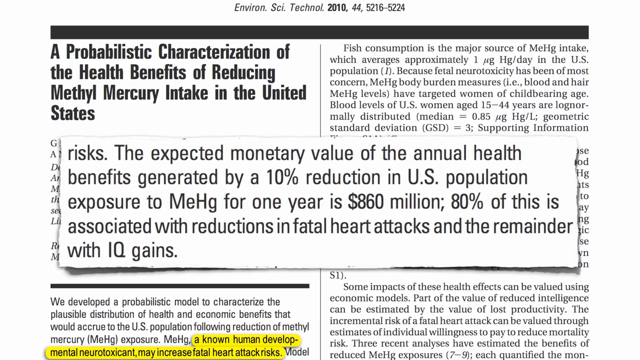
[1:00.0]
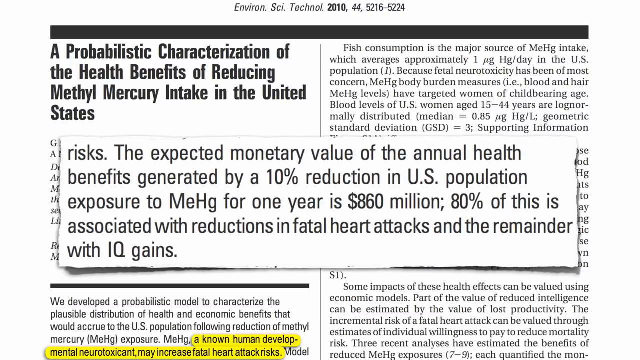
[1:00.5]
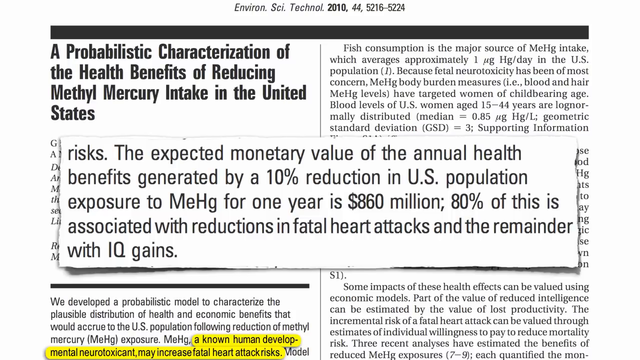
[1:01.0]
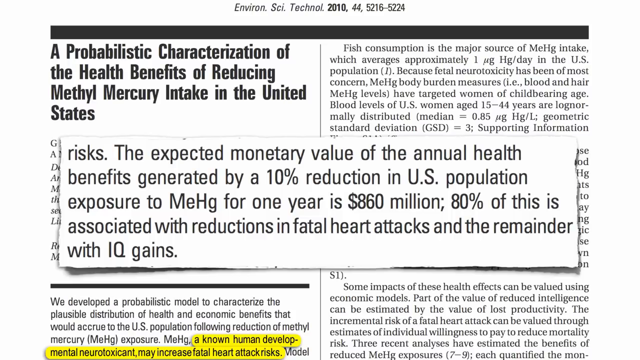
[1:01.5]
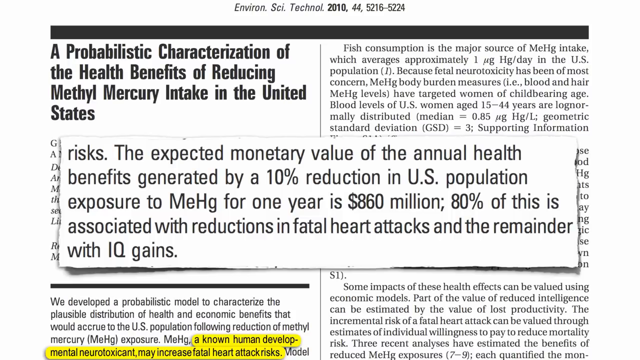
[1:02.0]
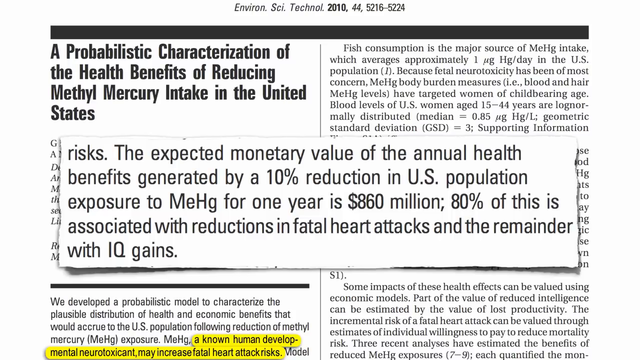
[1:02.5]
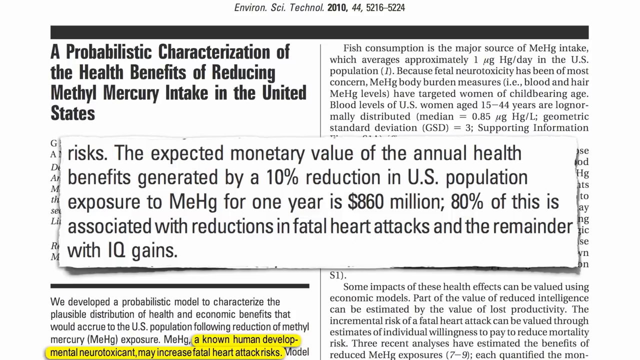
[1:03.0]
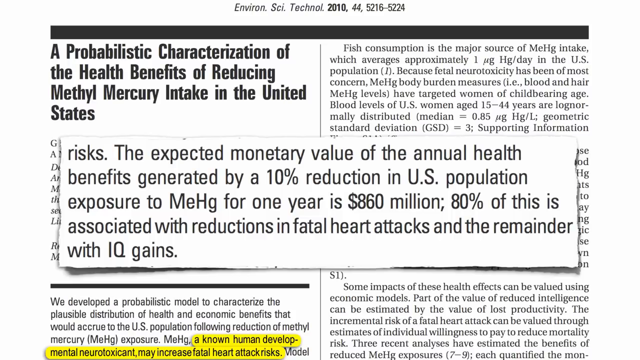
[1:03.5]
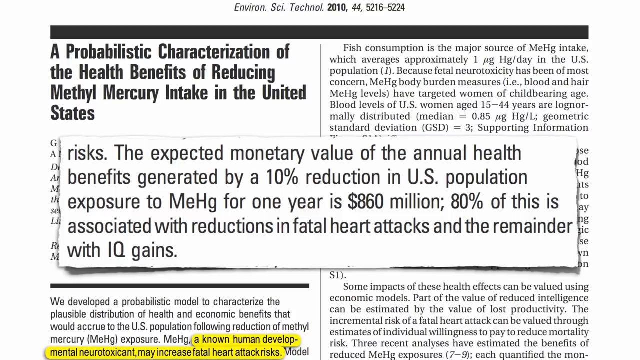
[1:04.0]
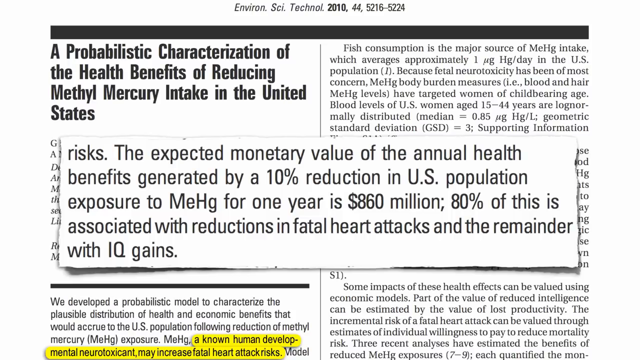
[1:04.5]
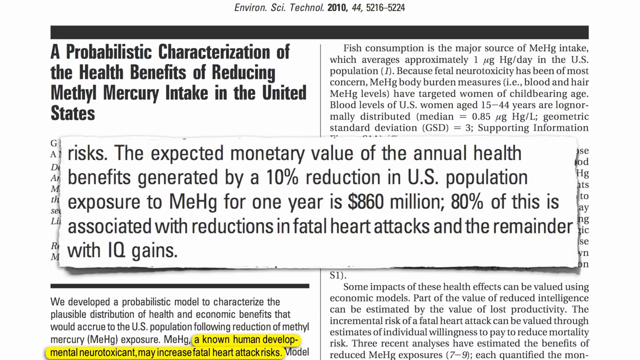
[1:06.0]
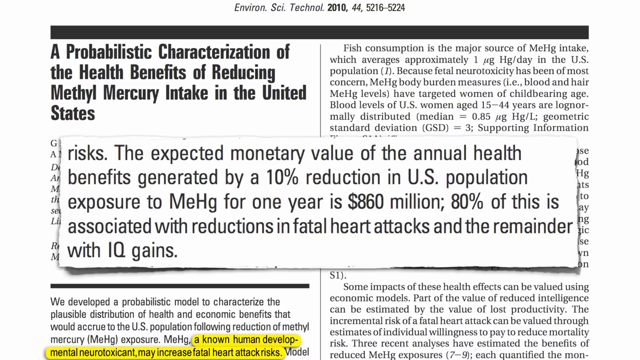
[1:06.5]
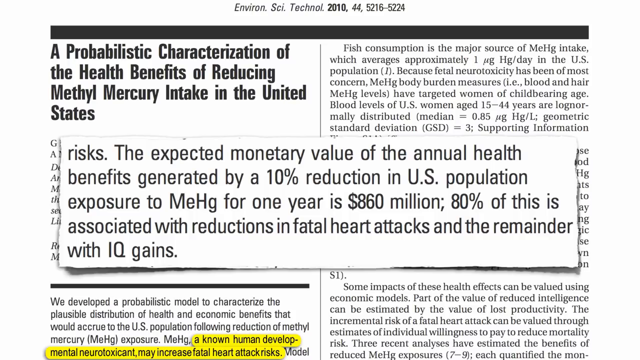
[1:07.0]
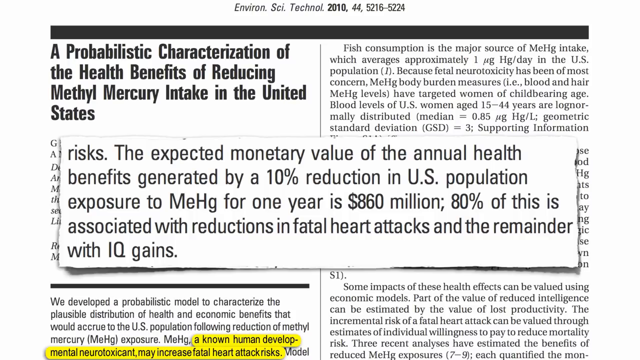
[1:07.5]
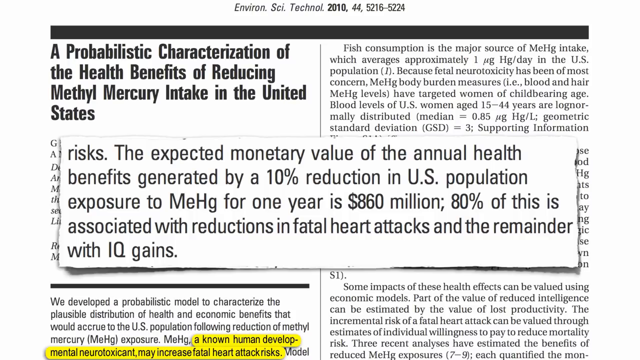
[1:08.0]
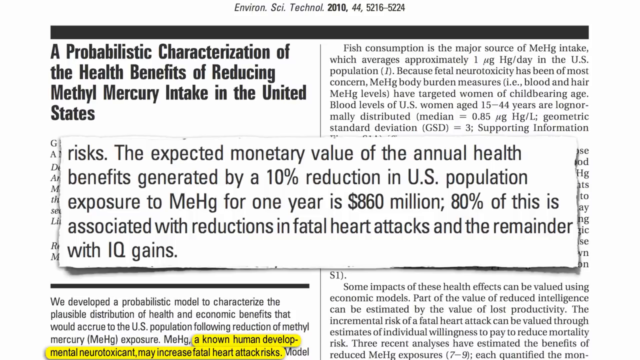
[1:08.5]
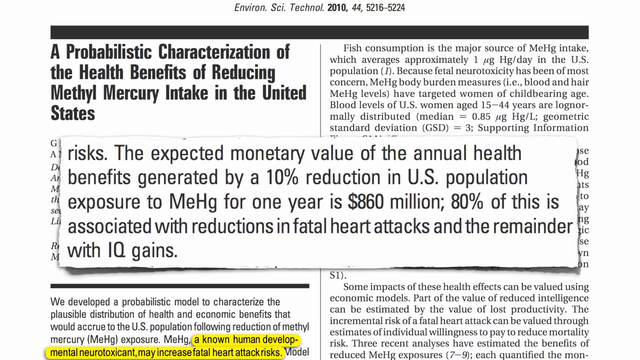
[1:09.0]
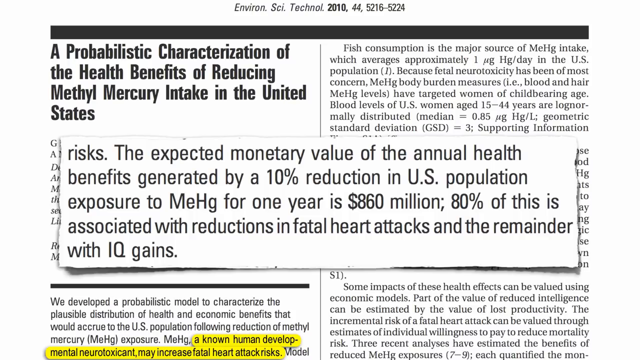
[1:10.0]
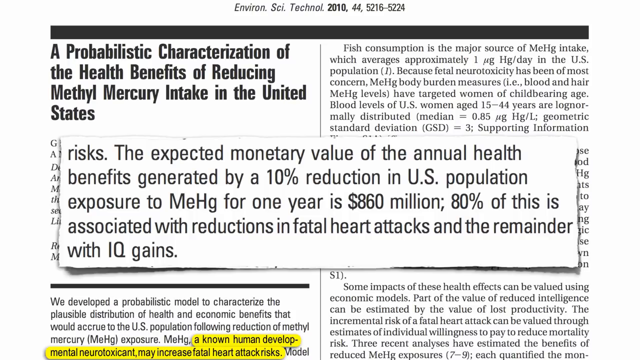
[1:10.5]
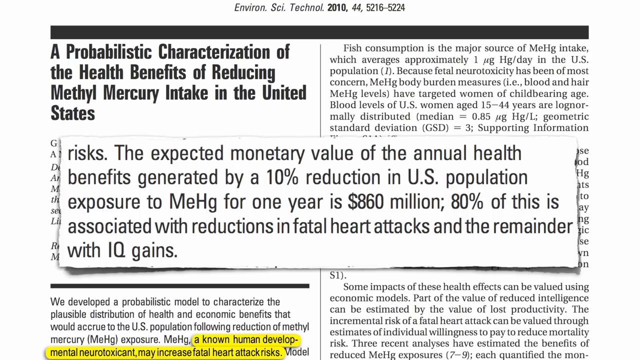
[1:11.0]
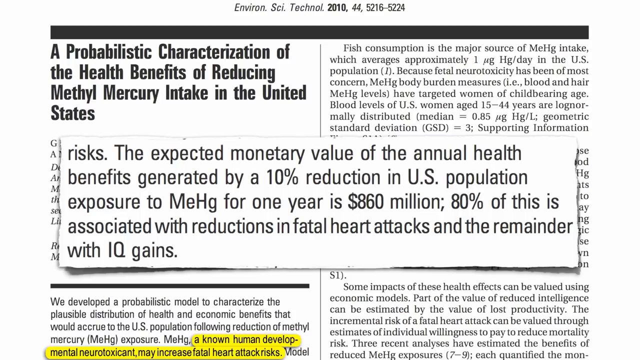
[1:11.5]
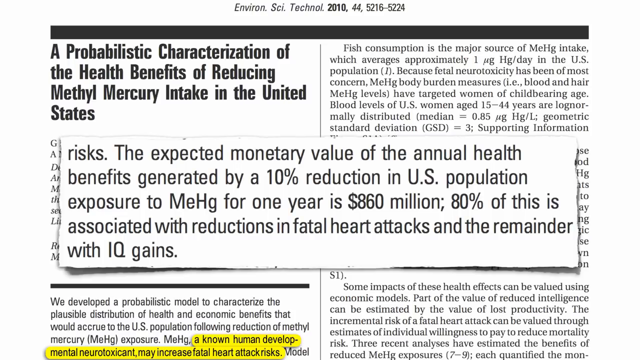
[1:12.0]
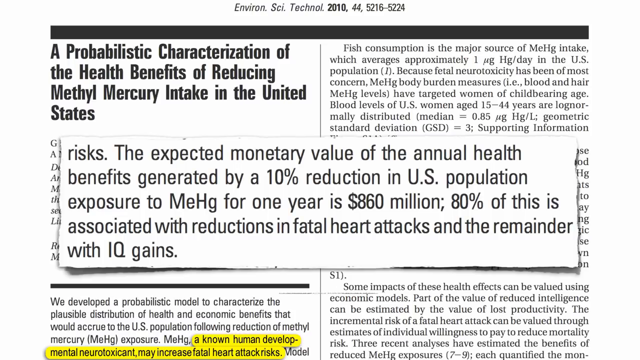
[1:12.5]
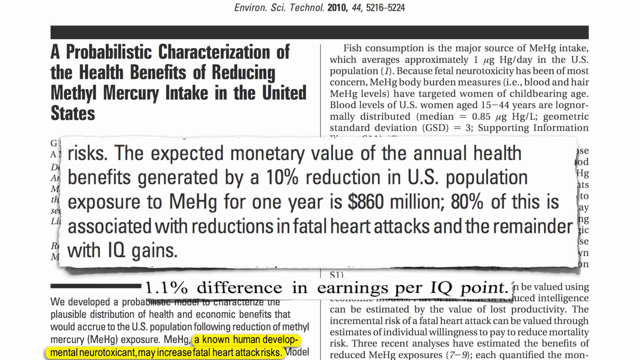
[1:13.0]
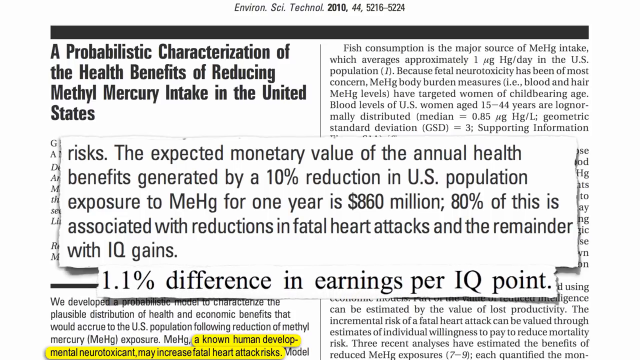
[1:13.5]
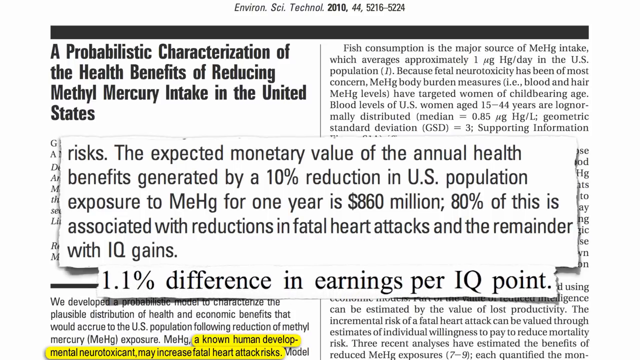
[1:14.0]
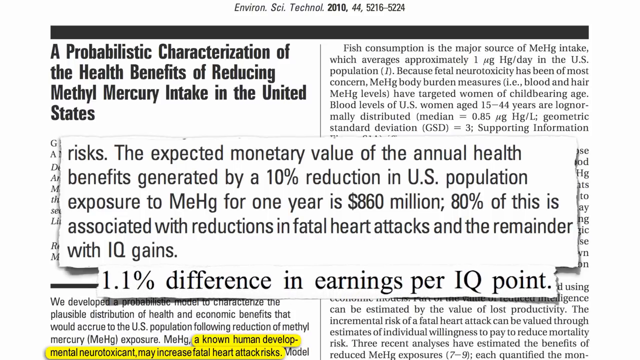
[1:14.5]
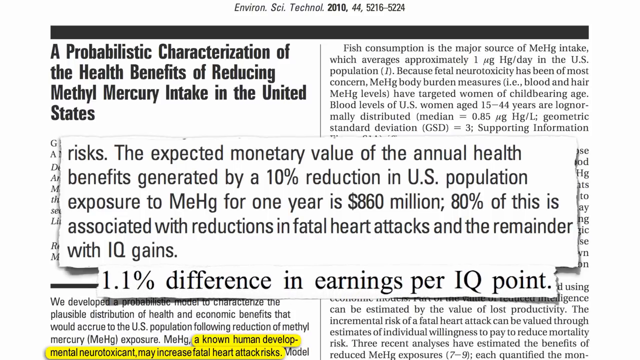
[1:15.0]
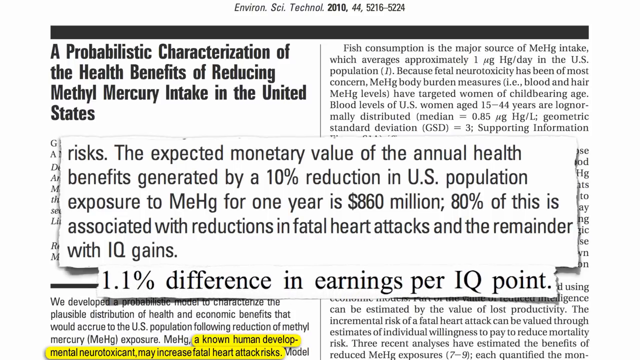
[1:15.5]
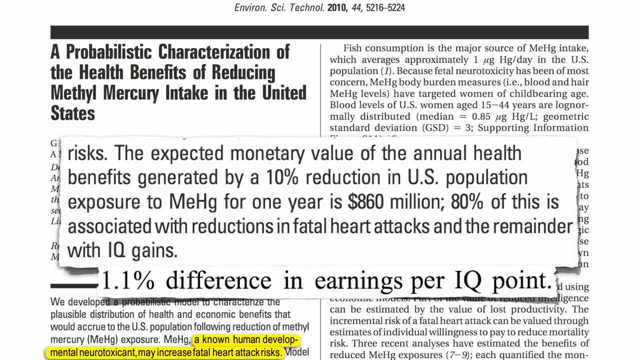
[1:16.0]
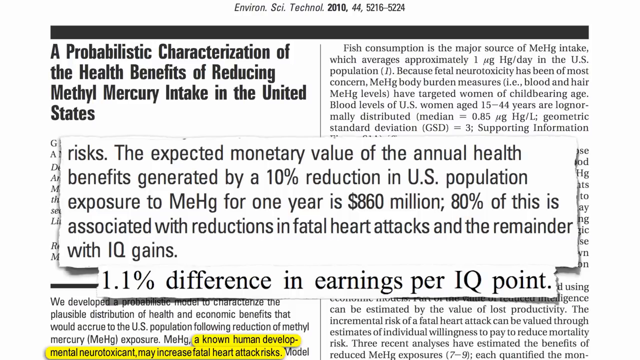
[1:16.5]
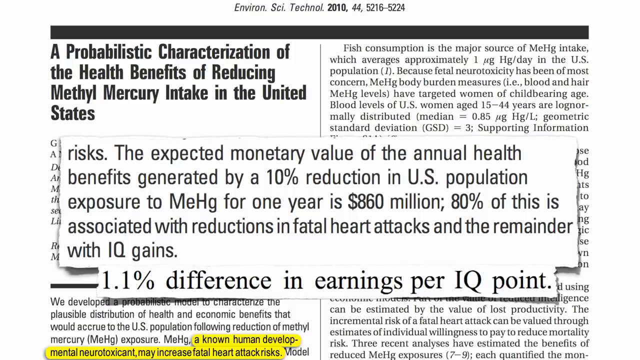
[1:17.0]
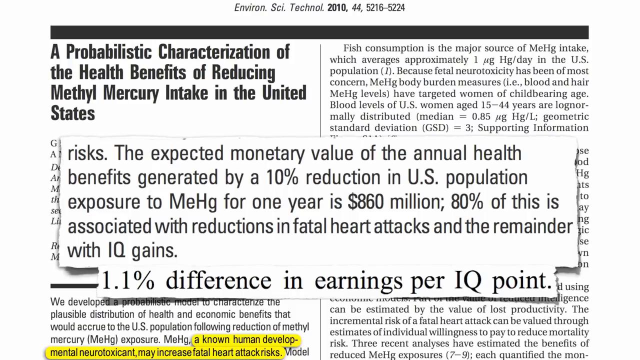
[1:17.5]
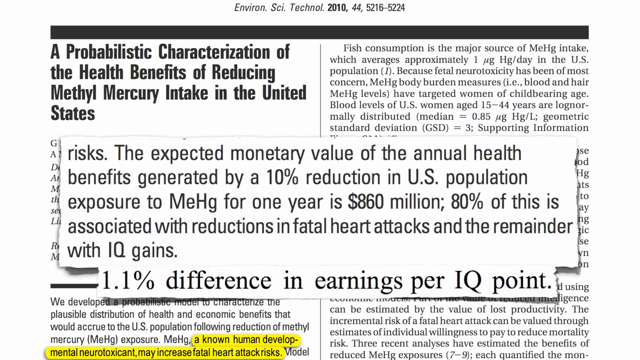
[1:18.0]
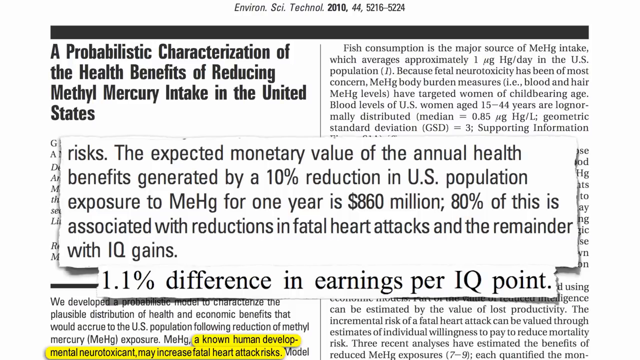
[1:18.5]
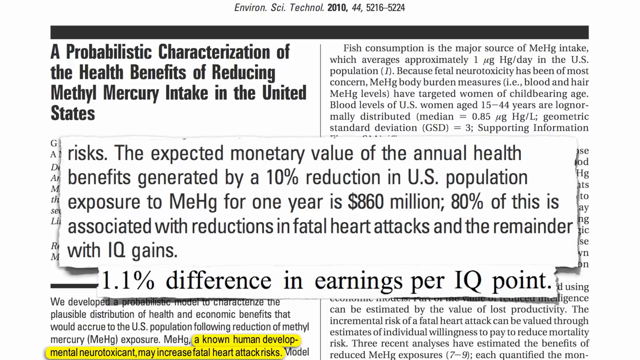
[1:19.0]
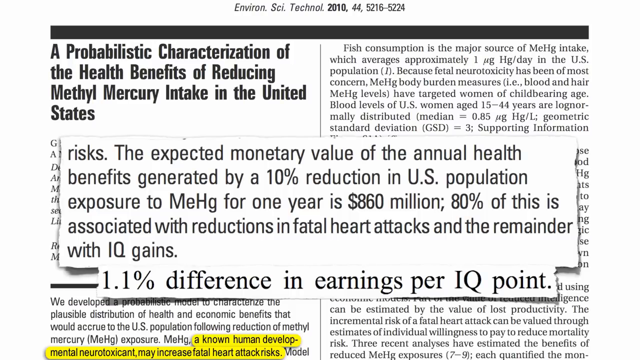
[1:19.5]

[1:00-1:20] An article in black text on a white background is titled "probabilistic characterization of the health benefits of reducing methylmercury intake in the United States." A very tiny piece of the article is extracted and placed in the upper right corner of the screen. At the bottom of the screen, text reads "the expected monetary value of the annual health benefits generated by 10 percent reduction in the U.S. population exposure to mercury for one year is 860 million. Eighty percent of this is associated with reductions of fatal heart attacks and the remainder with IQ gains." Pieces of the article are highlighted in yellow: "known human developmental neurotoxicant" and "may increase fatal heart attack risk." Another piece of text then pops up reading "1.1 percent difference in earnings per IQ point."